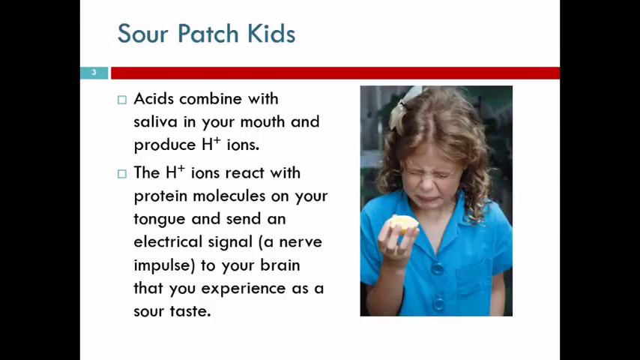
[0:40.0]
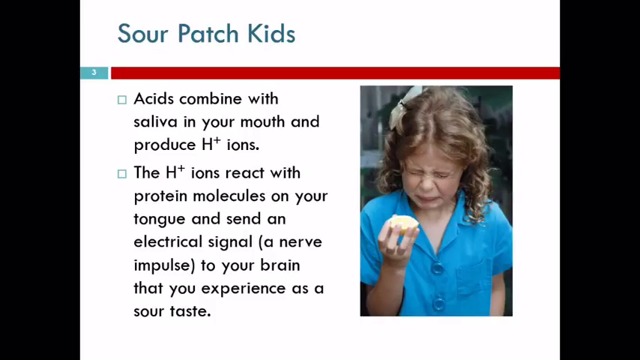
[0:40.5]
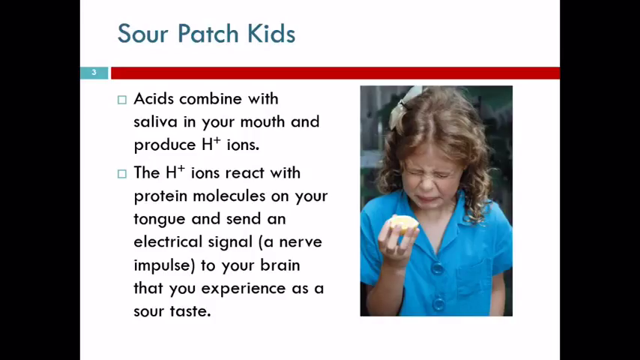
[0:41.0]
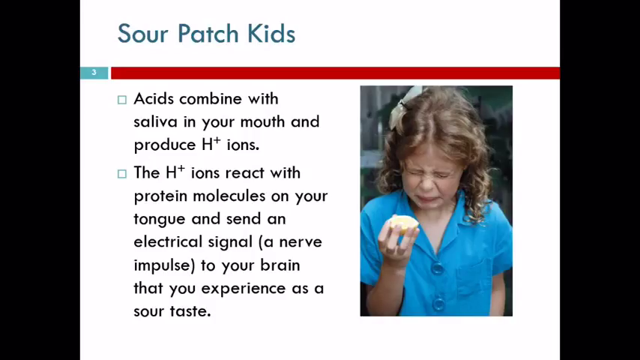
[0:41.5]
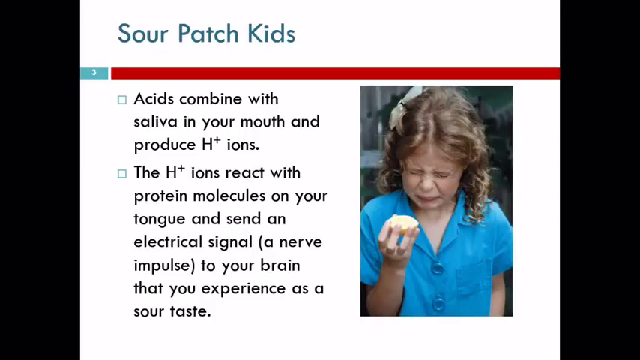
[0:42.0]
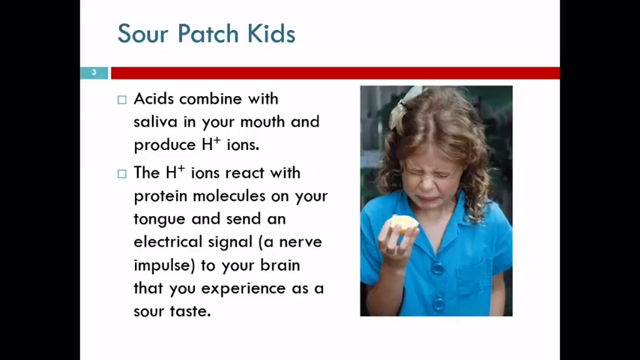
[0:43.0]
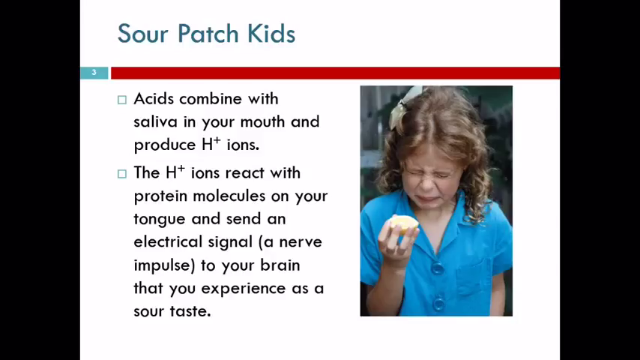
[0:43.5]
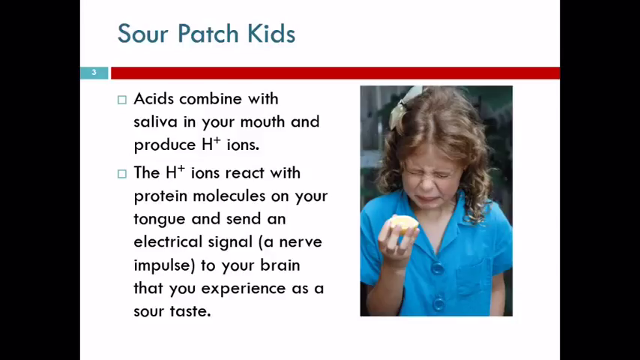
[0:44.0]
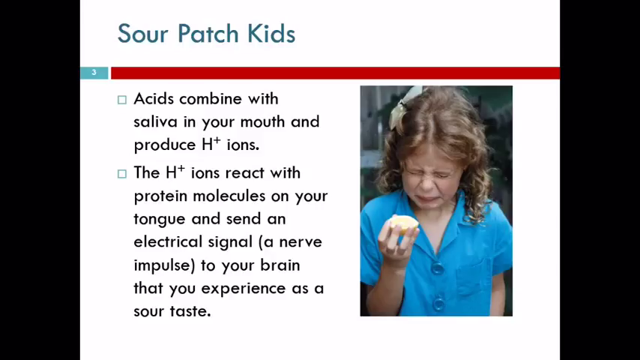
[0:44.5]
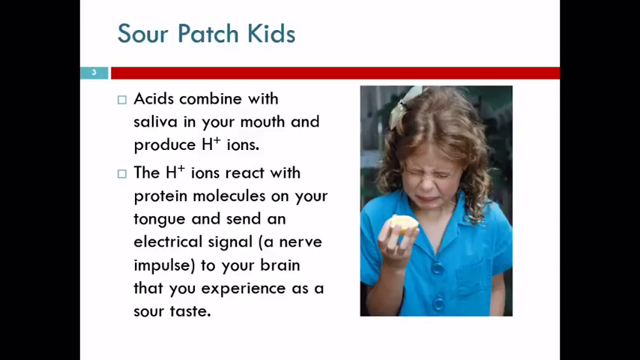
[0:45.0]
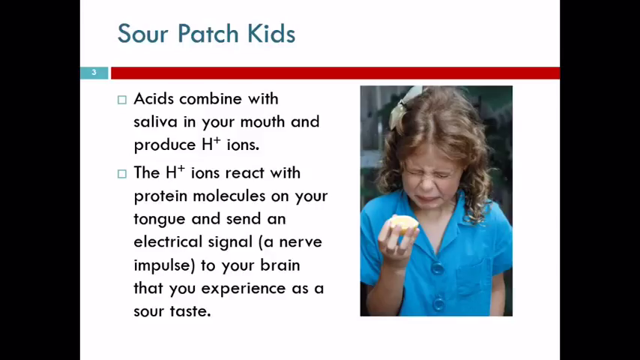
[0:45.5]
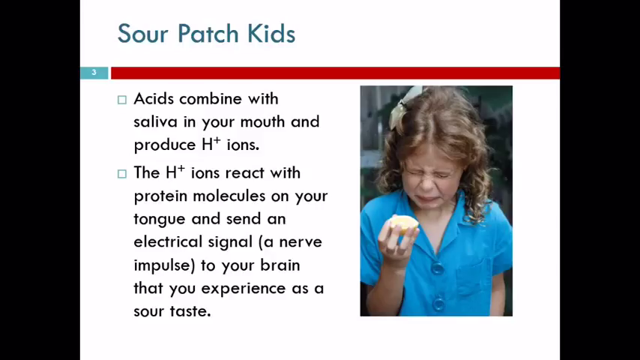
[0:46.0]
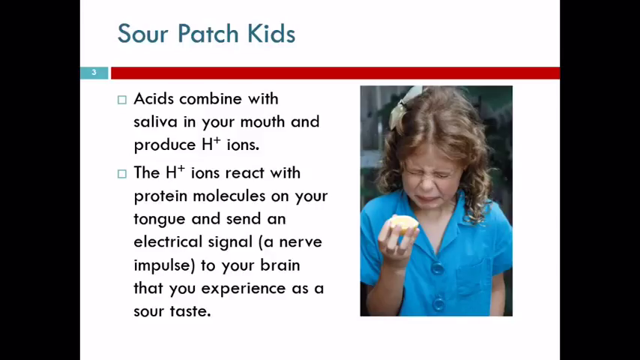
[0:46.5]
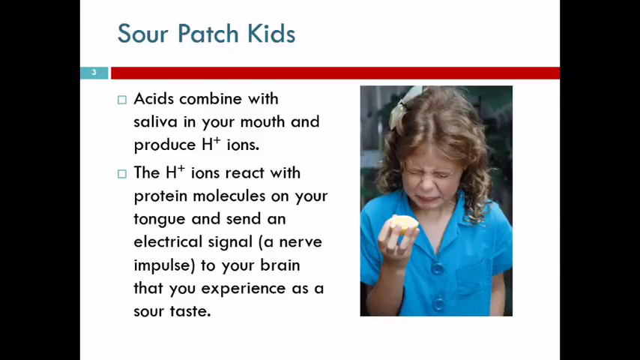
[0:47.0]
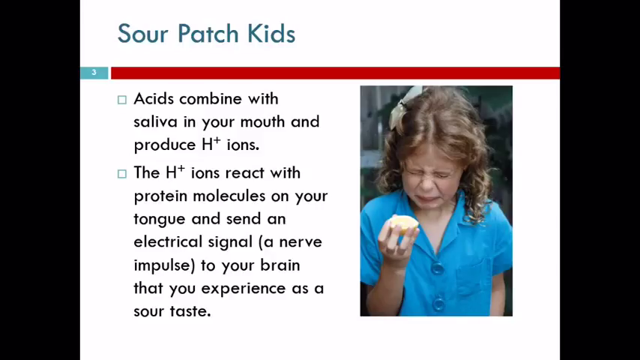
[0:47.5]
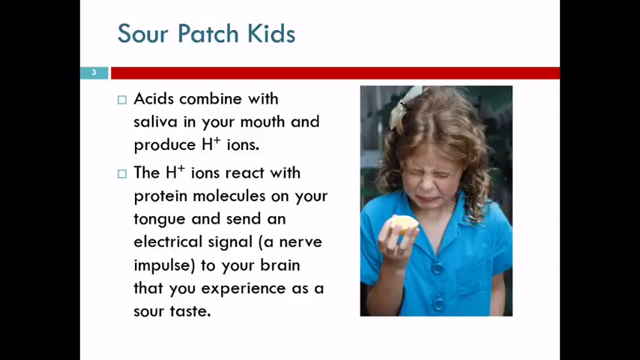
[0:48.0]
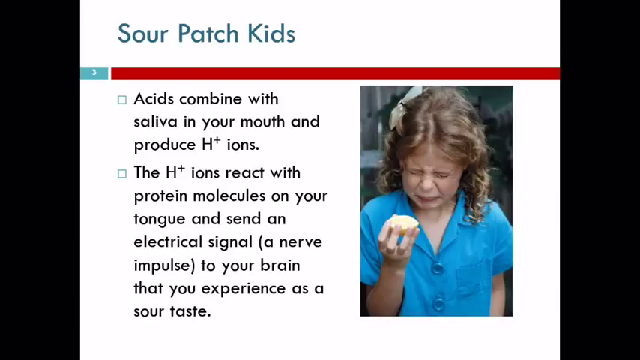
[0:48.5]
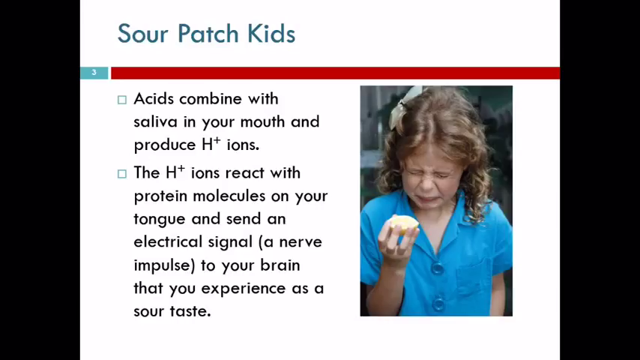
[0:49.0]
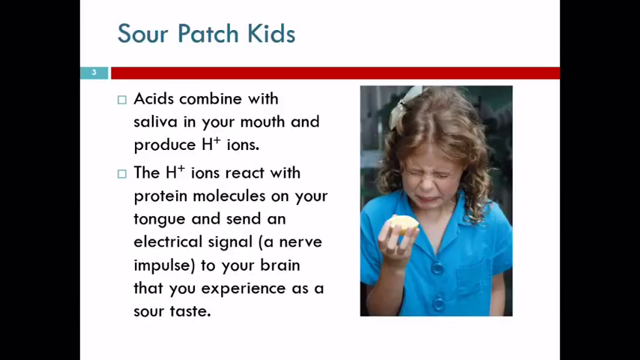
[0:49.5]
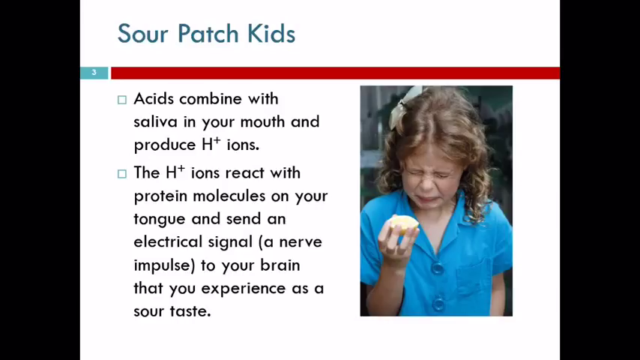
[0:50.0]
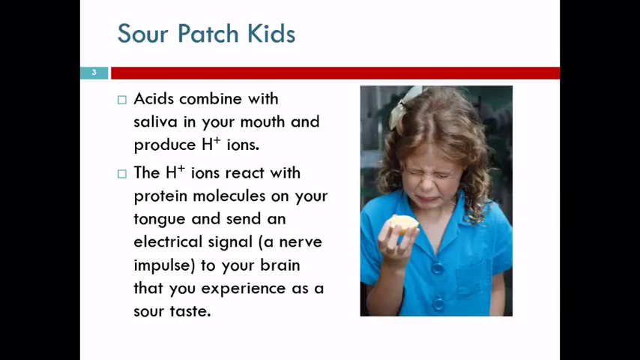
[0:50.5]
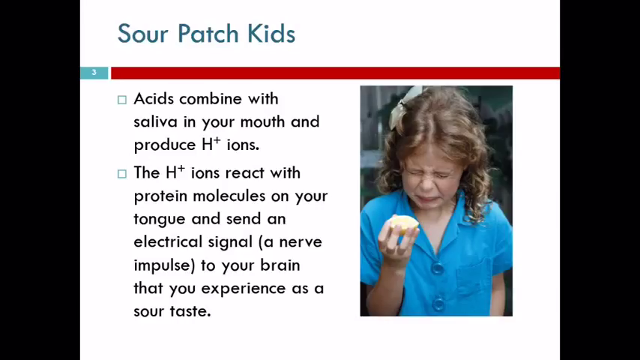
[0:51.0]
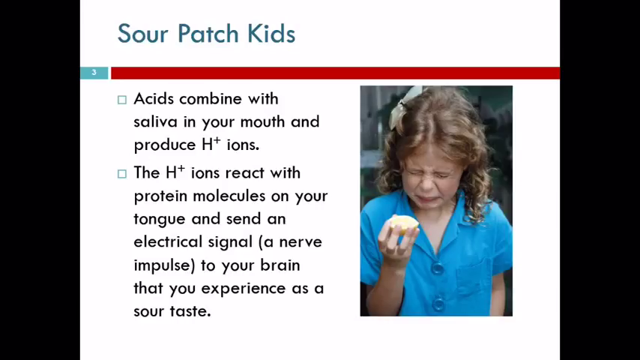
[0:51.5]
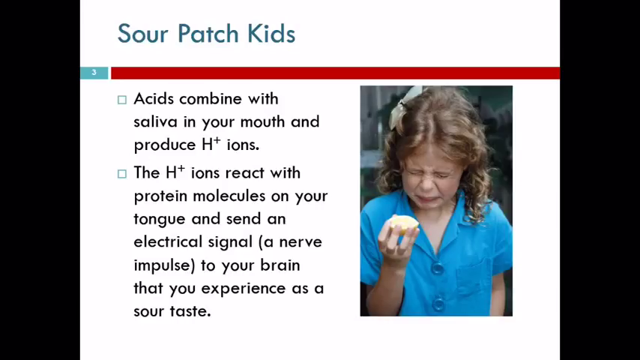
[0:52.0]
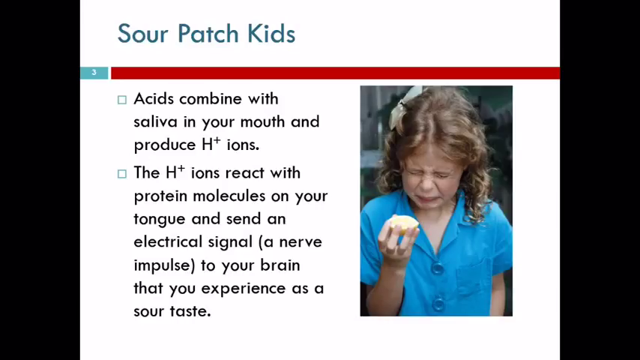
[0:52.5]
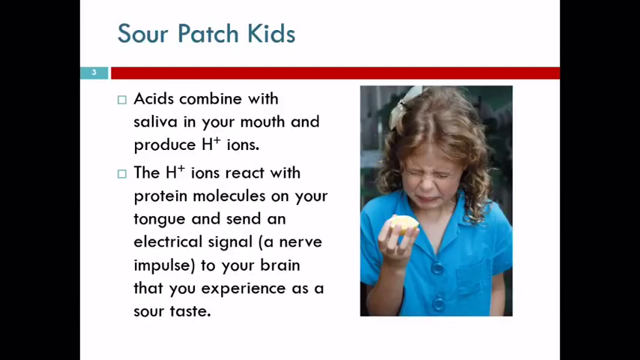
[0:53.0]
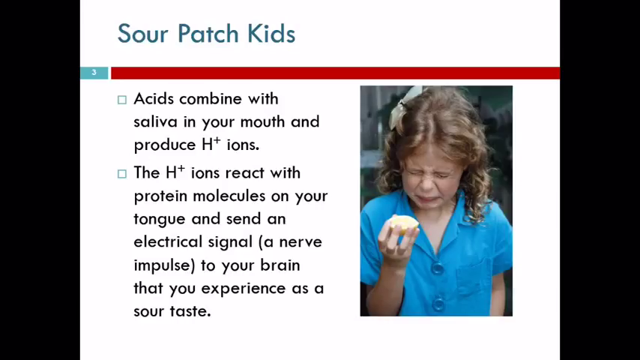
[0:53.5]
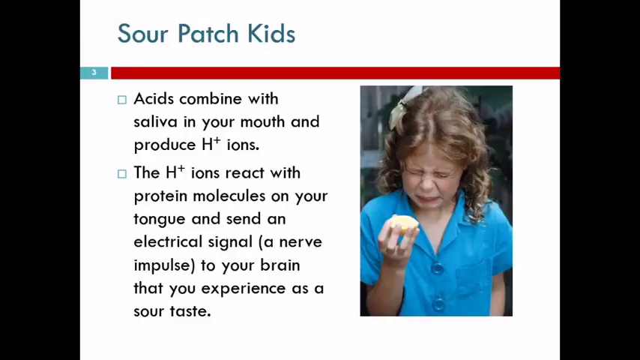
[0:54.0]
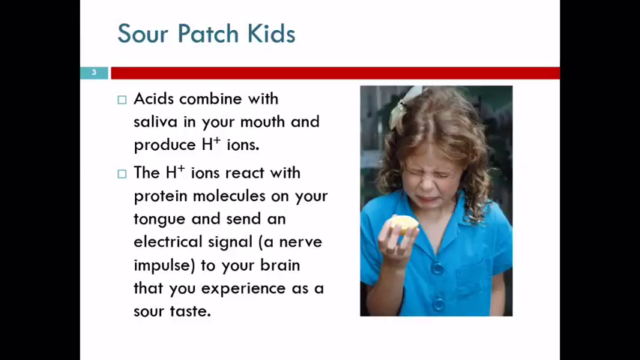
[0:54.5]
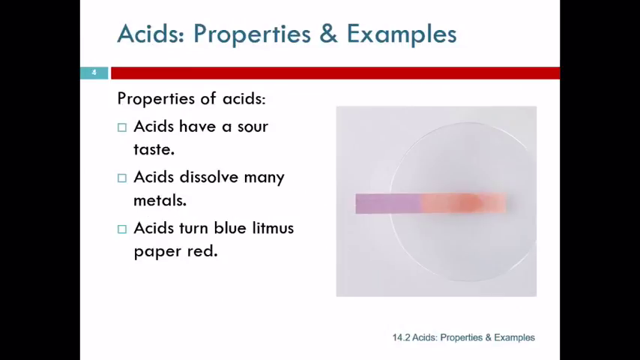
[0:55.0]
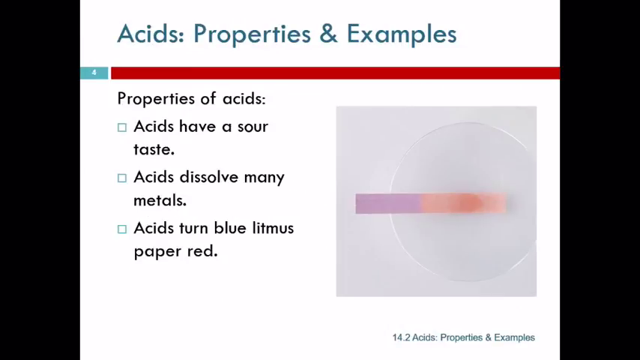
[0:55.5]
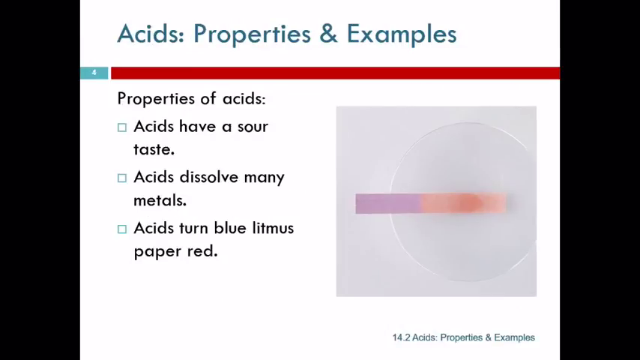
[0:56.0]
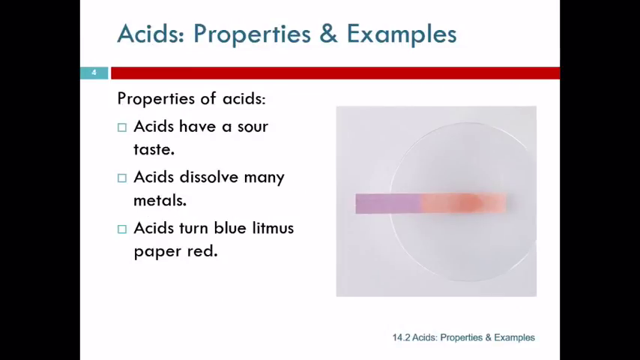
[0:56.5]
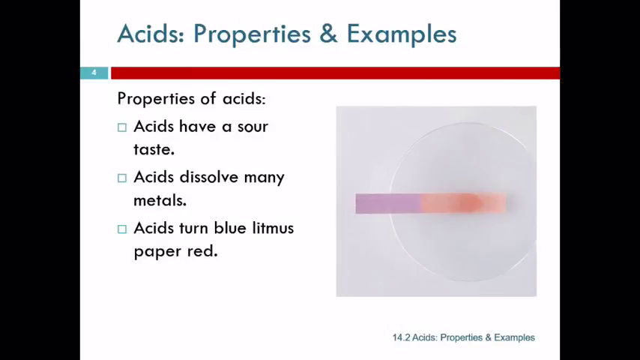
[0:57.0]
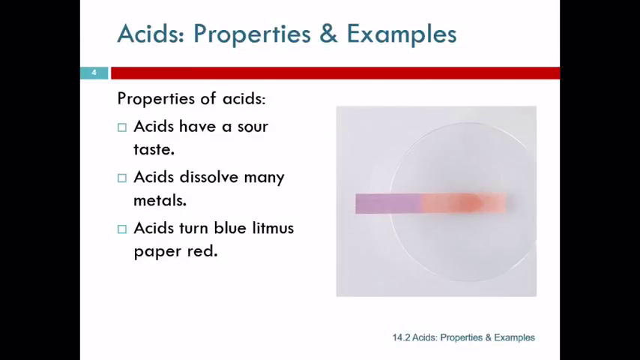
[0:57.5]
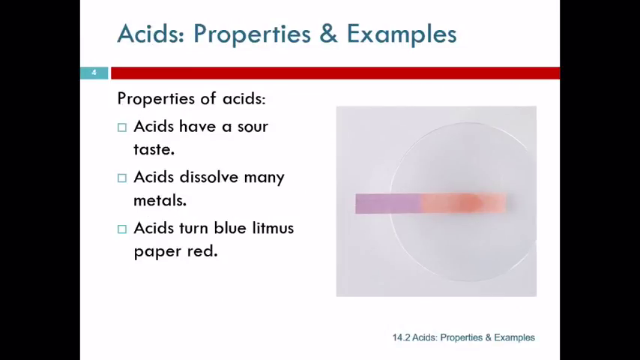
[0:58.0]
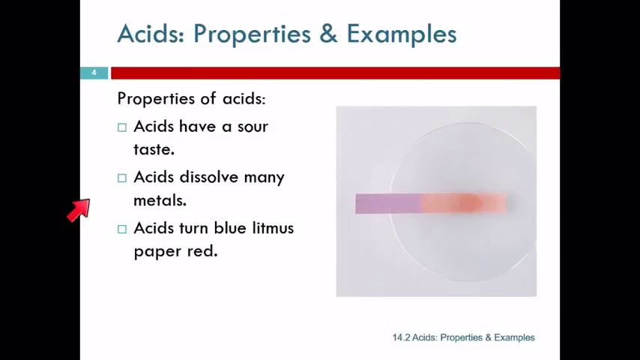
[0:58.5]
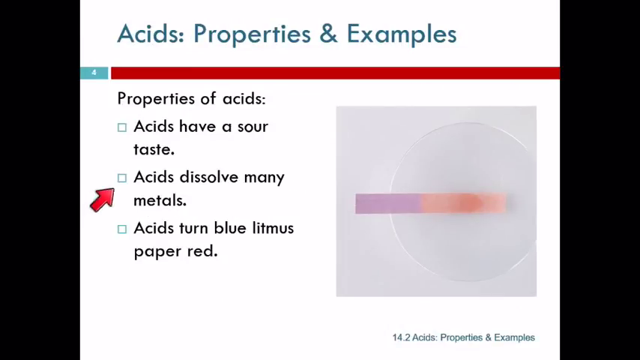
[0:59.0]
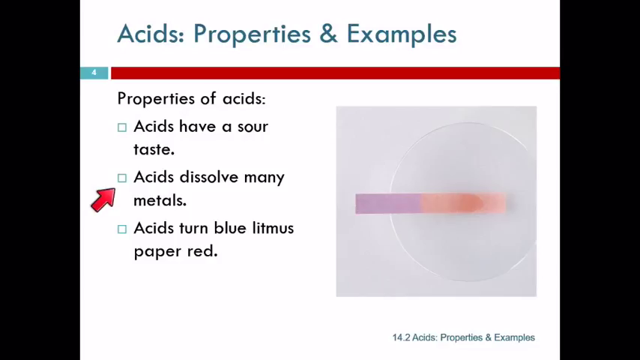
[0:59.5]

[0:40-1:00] Against a white background is what appears to be an opened page in a book. In the bottom right corner is an image of a girl with a frown on her face and her eyes closed; she has long hair and a ribbon tied in her hair on the right side of her head. Another image then appears on the right side, with a grayish background and a circle with a strip in the middle of it. On the left side are written words, and in the top left corner is a number 3 and the words "Sour Patch Kids" written in blue.